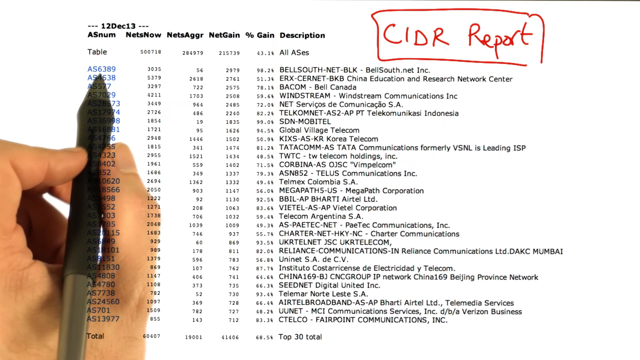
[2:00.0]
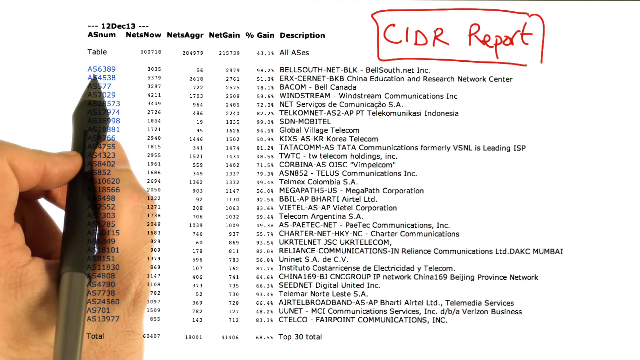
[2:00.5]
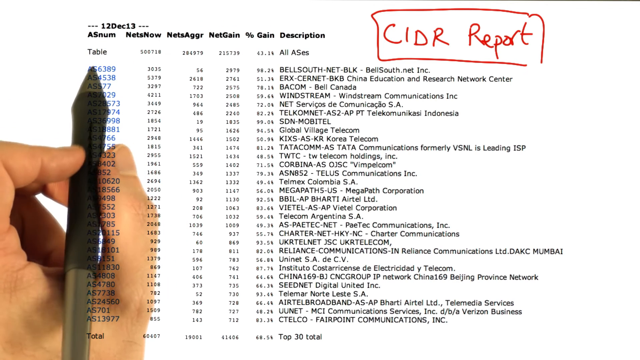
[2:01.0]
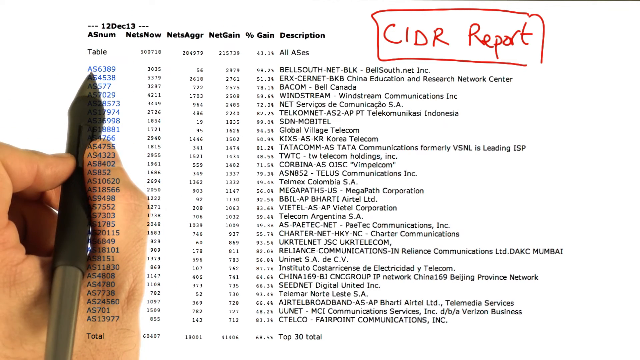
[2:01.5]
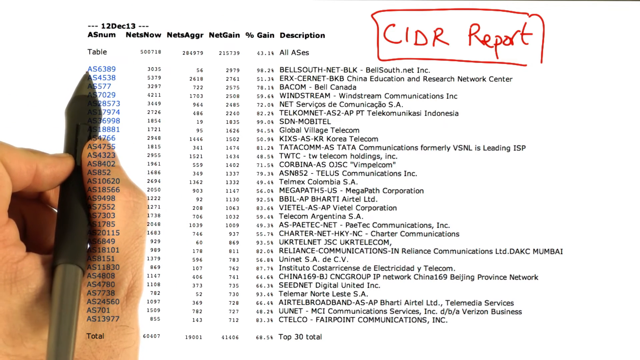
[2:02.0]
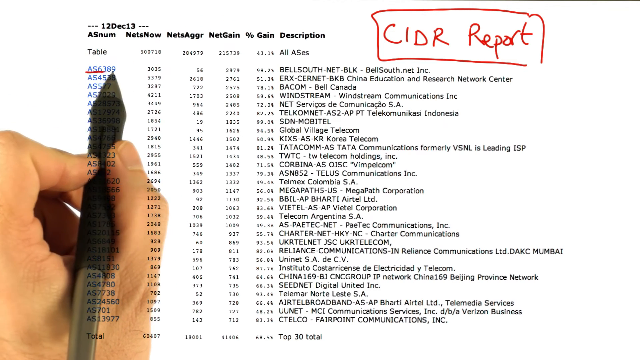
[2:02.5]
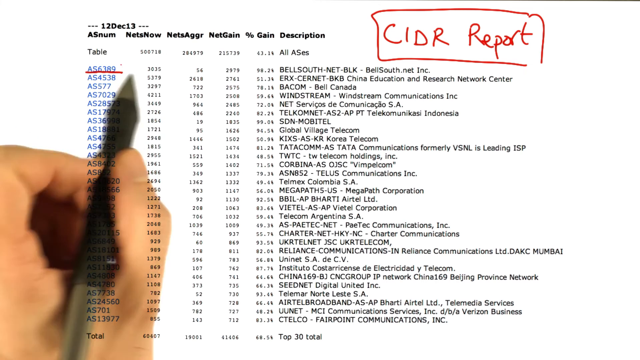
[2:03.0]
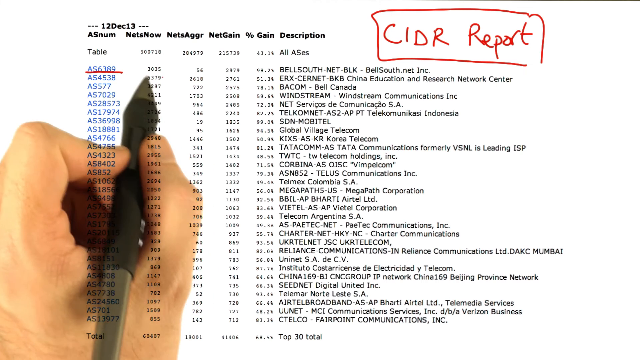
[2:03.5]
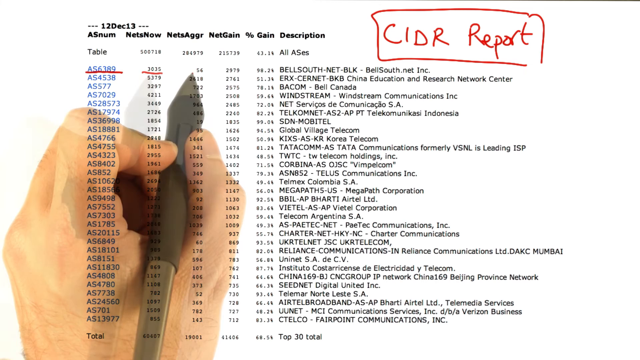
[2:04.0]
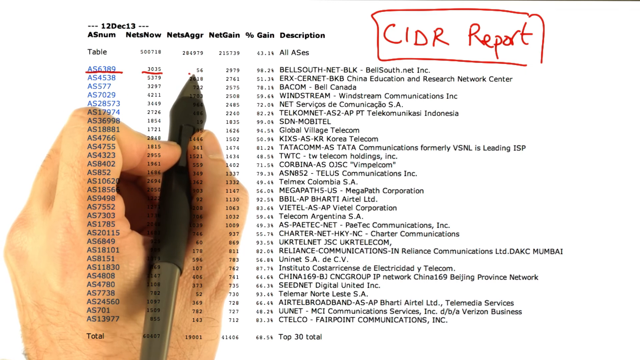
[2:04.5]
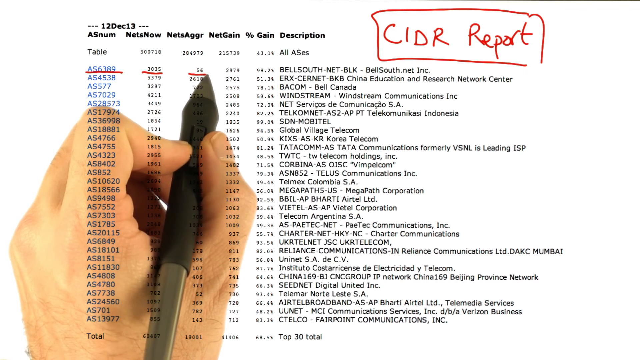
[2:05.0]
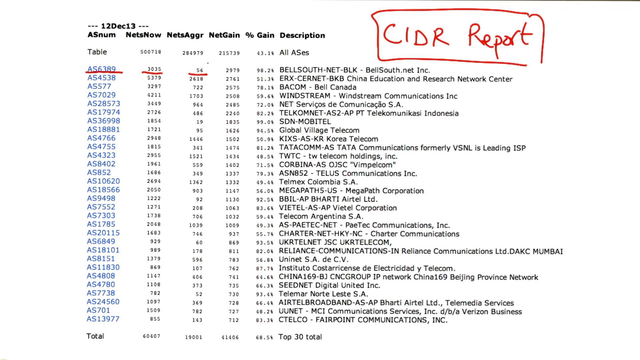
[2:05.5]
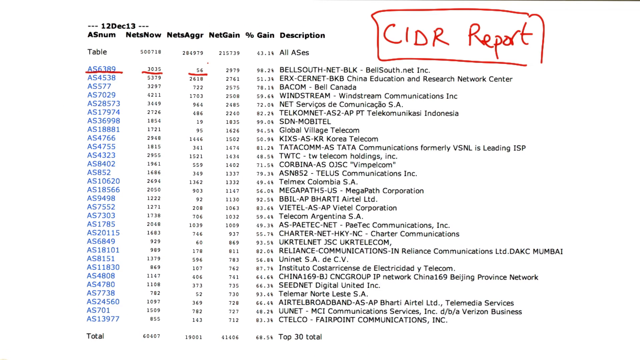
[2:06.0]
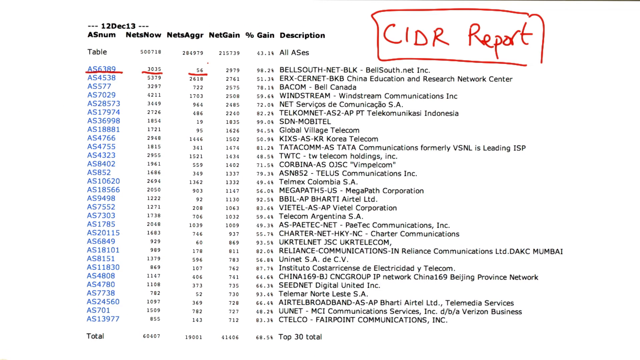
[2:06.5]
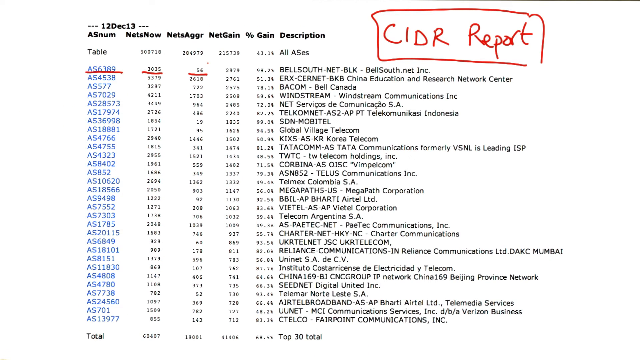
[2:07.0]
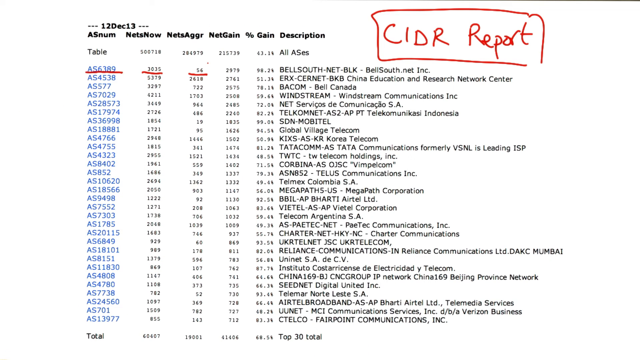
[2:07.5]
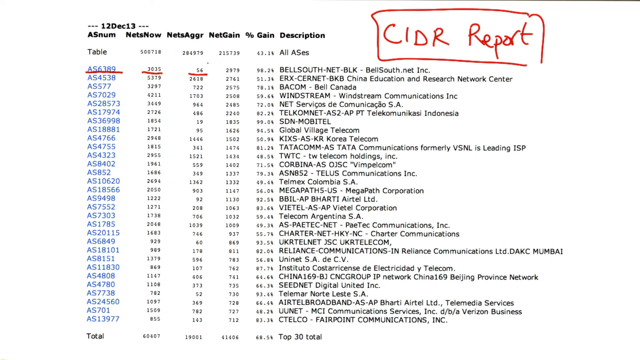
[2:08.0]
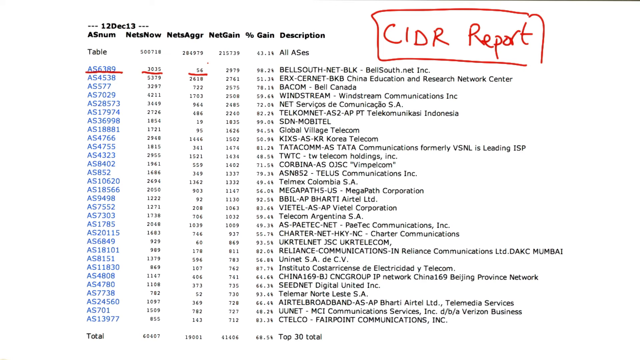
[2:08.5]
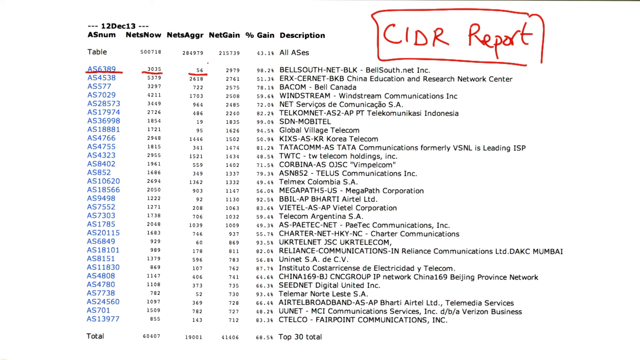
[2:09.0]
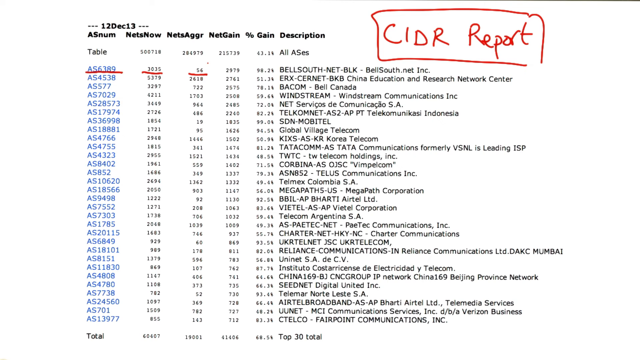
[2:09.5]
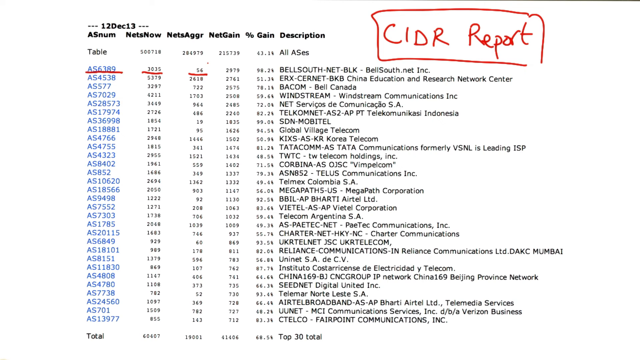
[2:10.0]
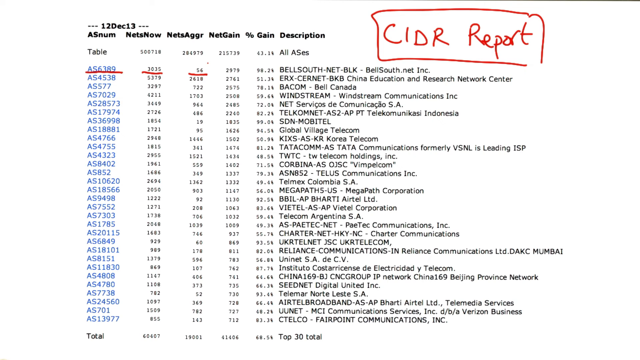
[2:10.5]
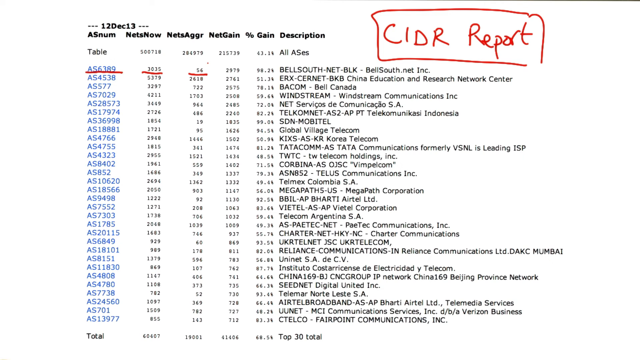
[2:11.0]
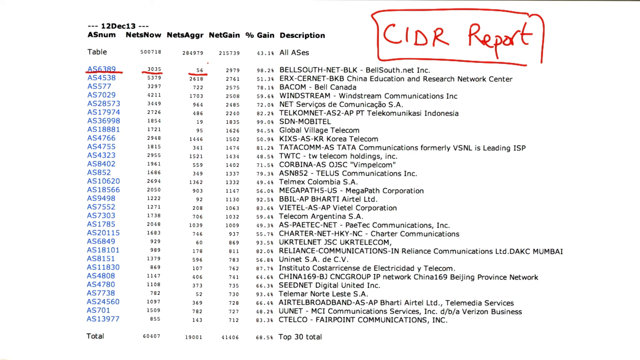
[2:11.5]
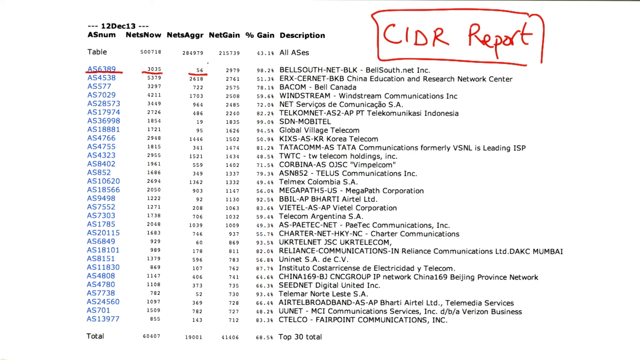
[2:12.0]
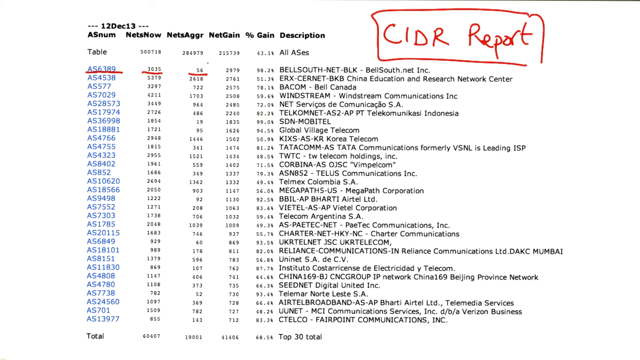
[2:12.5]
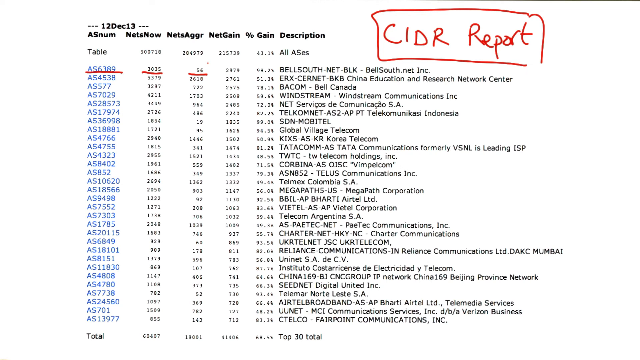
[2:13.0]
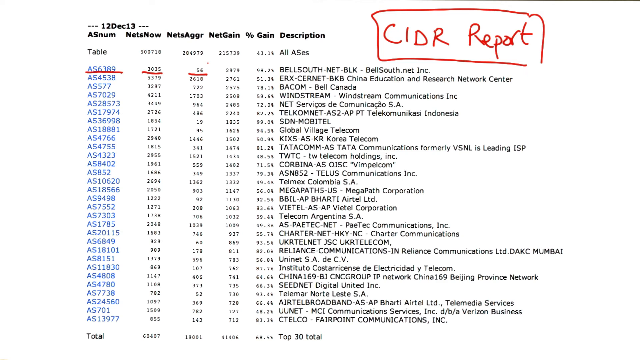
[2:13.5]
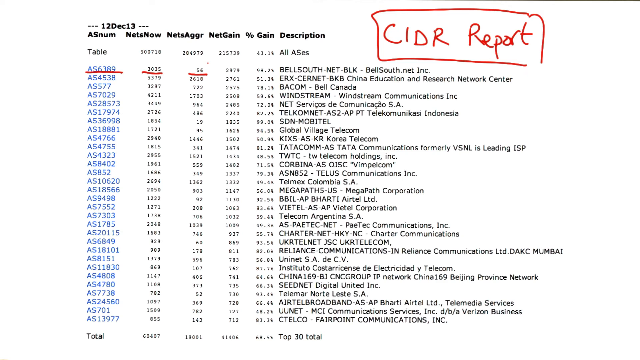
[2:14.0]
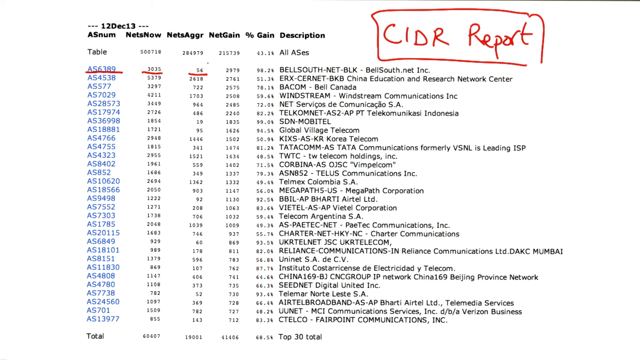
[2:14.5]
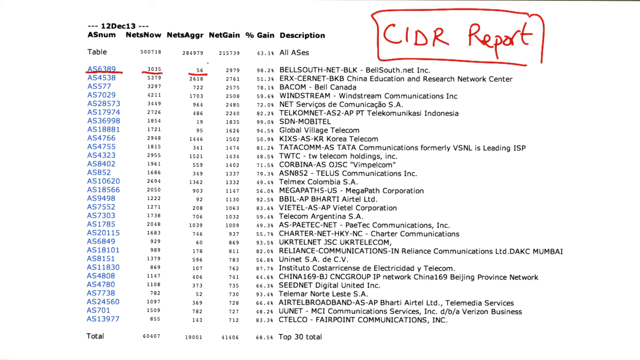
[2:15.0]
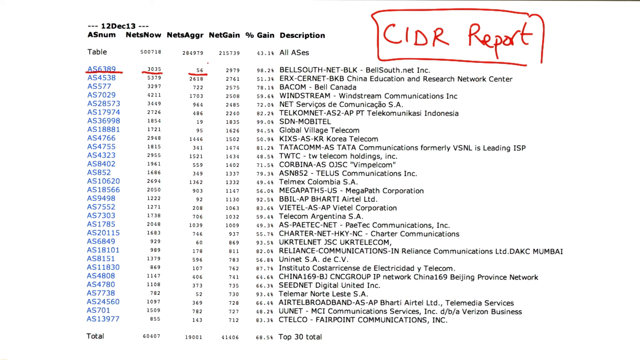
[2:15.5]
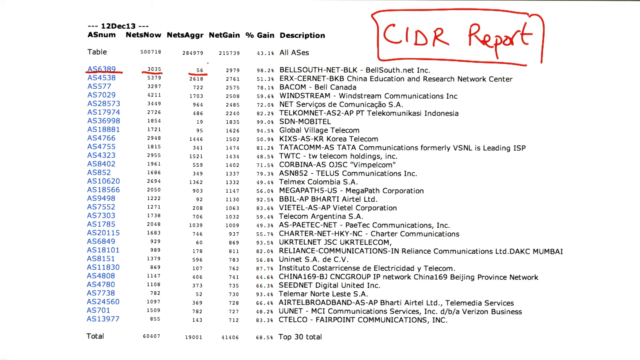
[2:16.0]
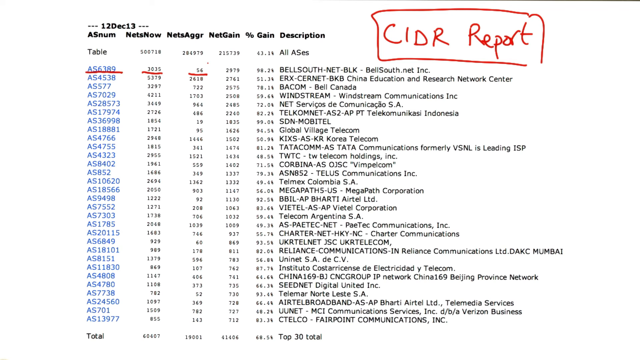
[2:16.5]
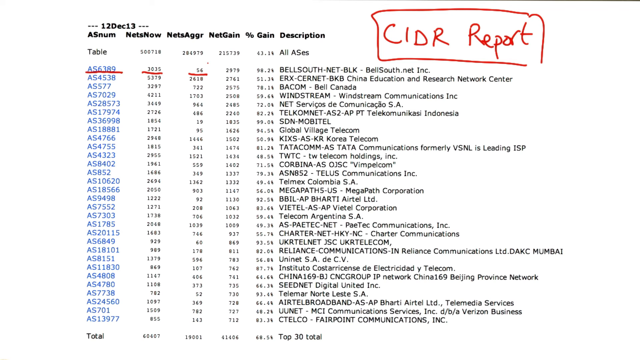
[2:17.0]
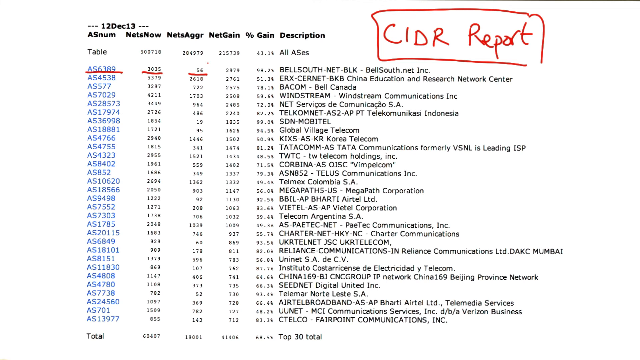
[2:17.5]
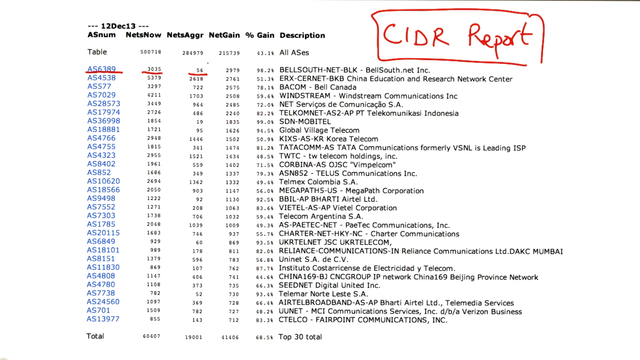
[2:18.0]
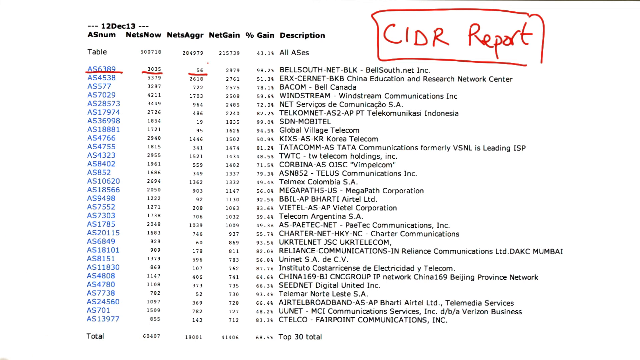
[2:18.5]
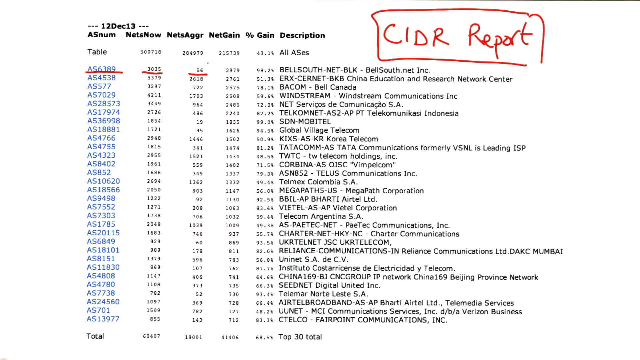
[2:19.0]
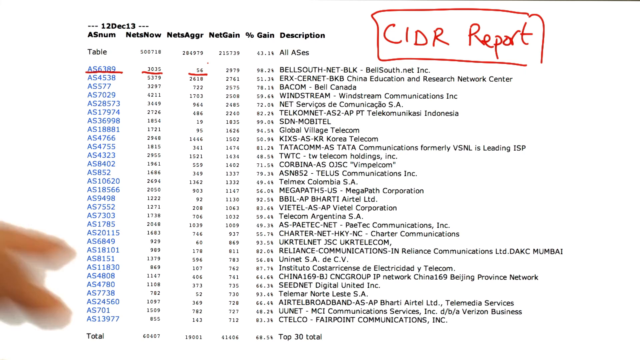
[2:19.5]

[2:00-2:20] The pen underlines the very first row under the table column, "AS6189," then the entry to its right, "3035," then the next one over, "54." The pen goes off the screen and the page stays still for a moment before the pen comes back and points at something. In the top left, in black, it says "12, December 13." Below that are the columns "AS NUM," "NETS NOW," "NETS AGGREGATOR," "NET GAIN," "PERCENTAGE GAIN" and "DESCRIPTION," with numbers and letters beneath them. Under these is "TABLE," followed by four sections with numbers, then "ALL AseS." To the right is a drawn red rectangle with the red letters "CIDR REPORT" inside. At the bottom is "TOTAL," with numbers to its right lining up with the columns above.